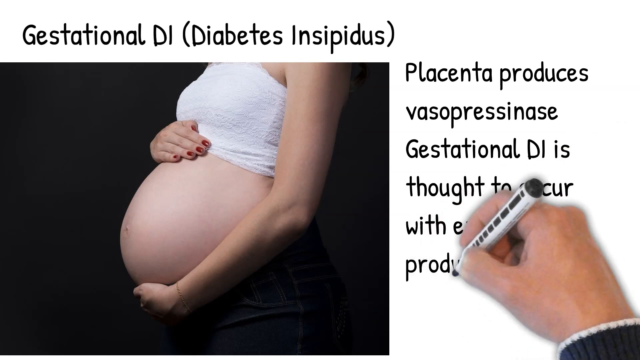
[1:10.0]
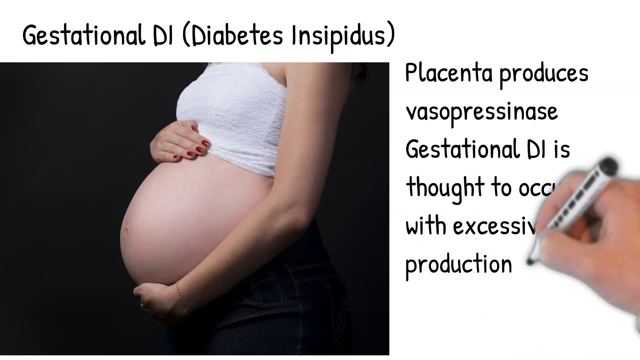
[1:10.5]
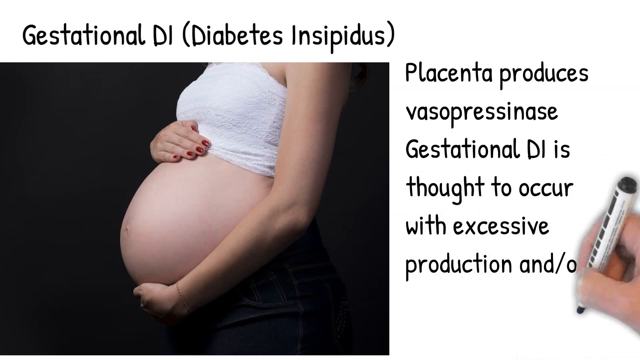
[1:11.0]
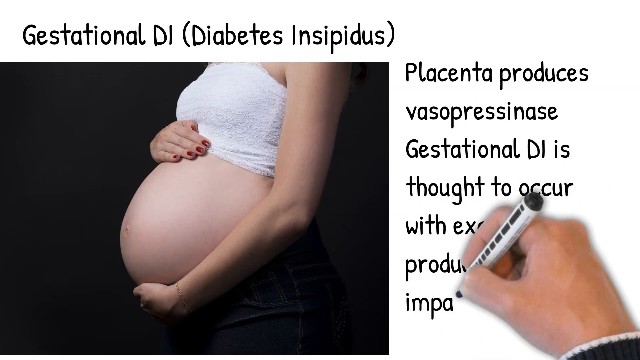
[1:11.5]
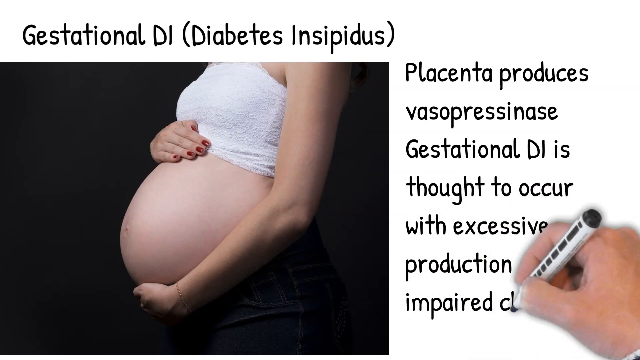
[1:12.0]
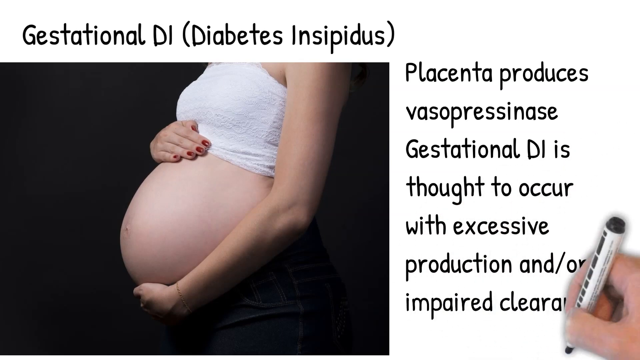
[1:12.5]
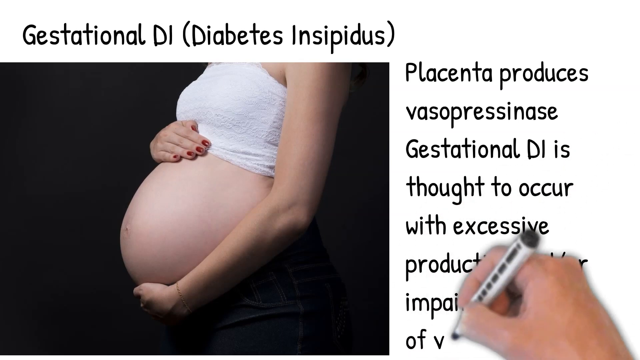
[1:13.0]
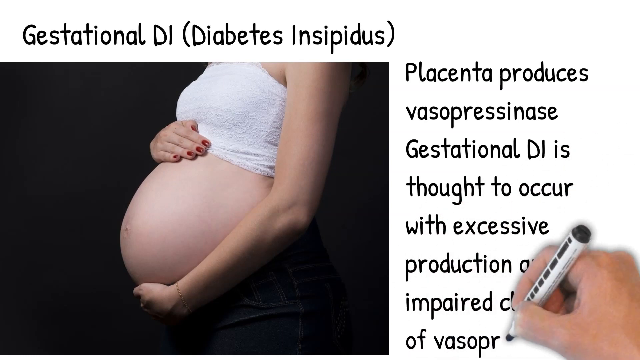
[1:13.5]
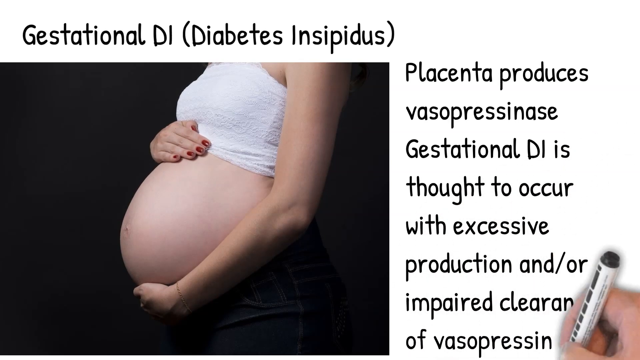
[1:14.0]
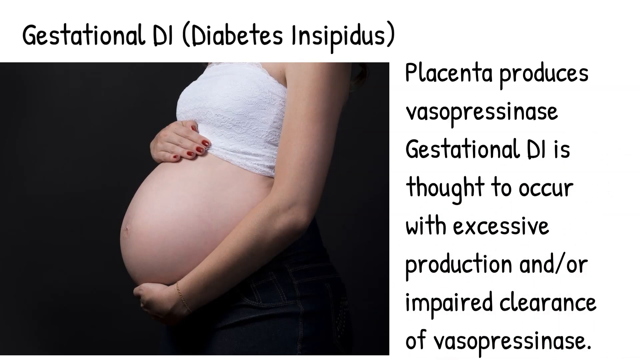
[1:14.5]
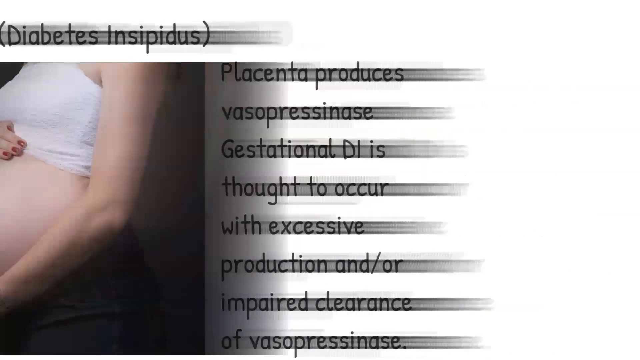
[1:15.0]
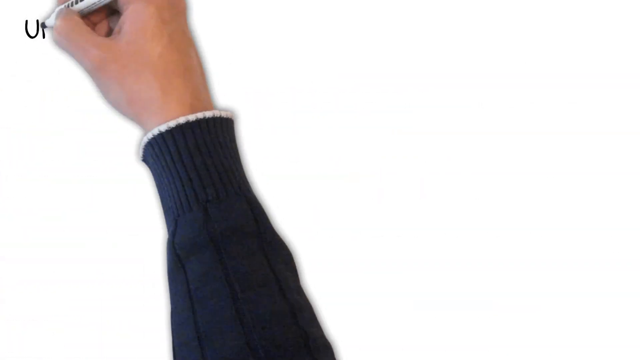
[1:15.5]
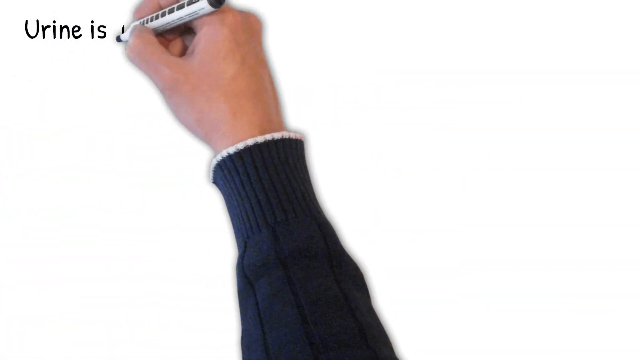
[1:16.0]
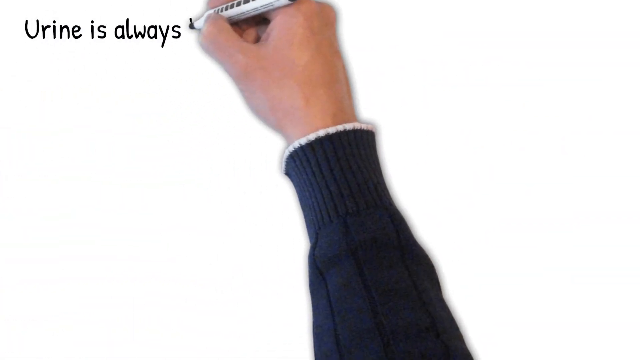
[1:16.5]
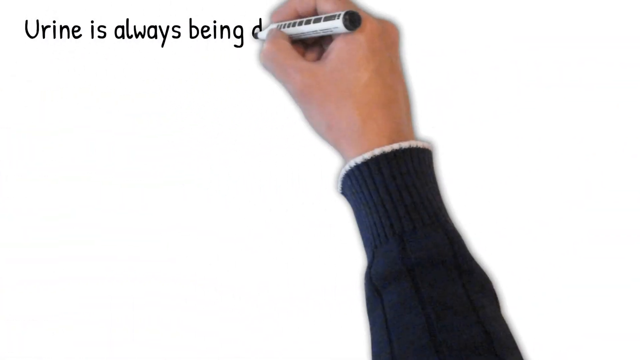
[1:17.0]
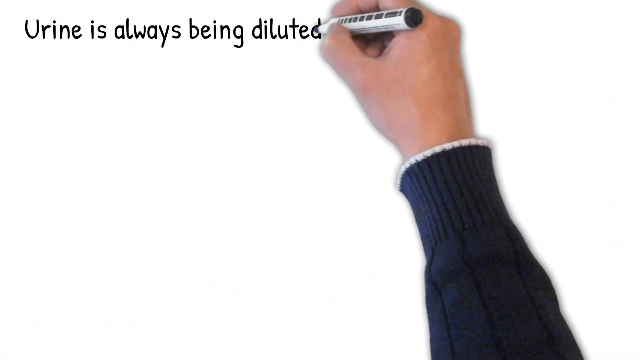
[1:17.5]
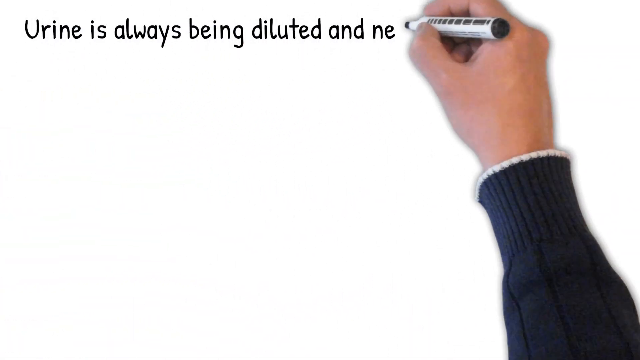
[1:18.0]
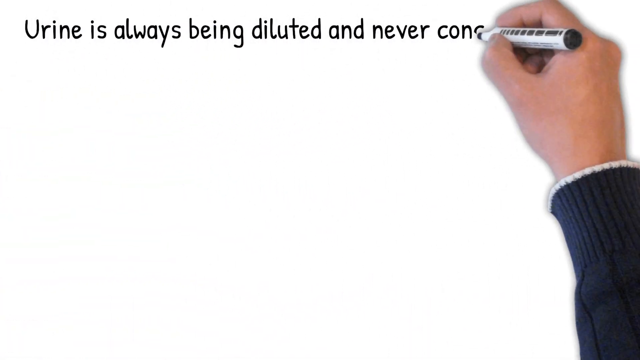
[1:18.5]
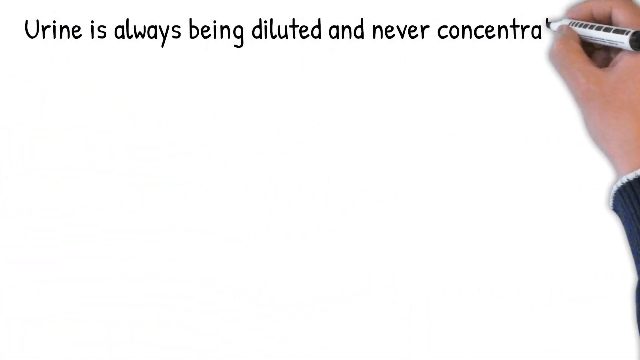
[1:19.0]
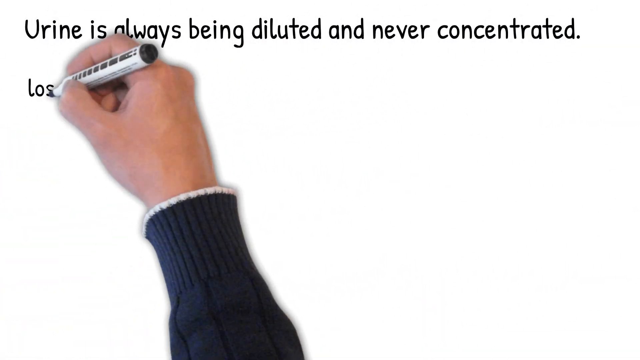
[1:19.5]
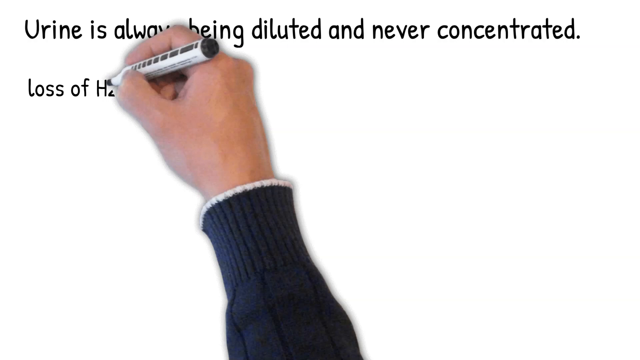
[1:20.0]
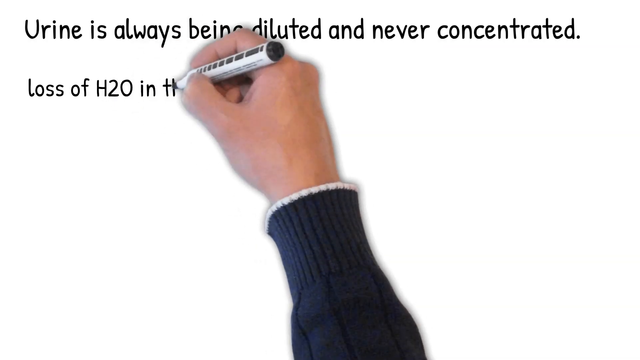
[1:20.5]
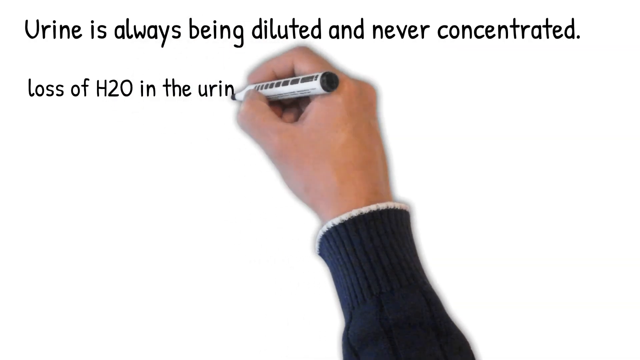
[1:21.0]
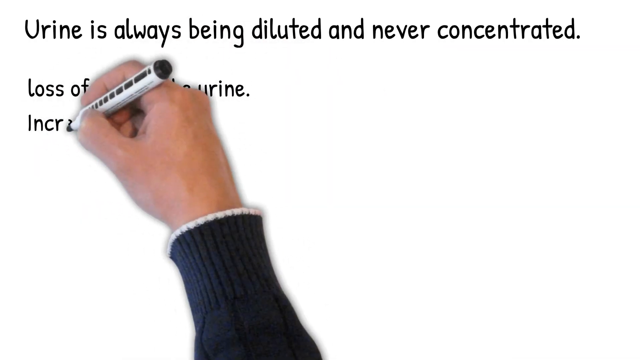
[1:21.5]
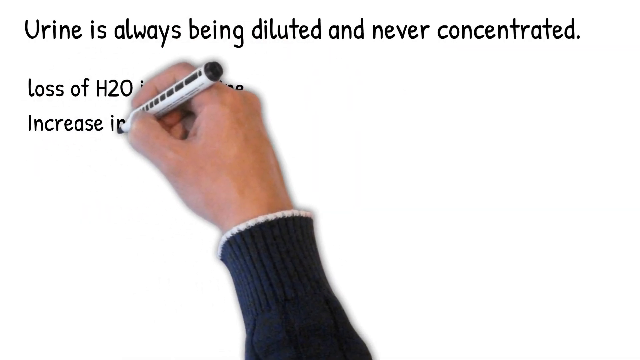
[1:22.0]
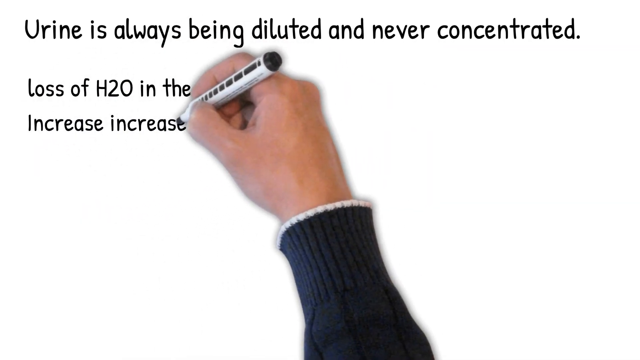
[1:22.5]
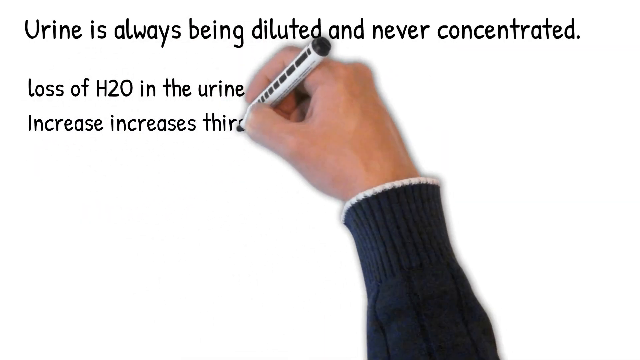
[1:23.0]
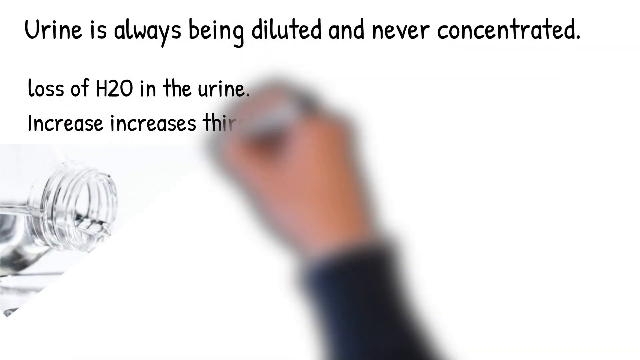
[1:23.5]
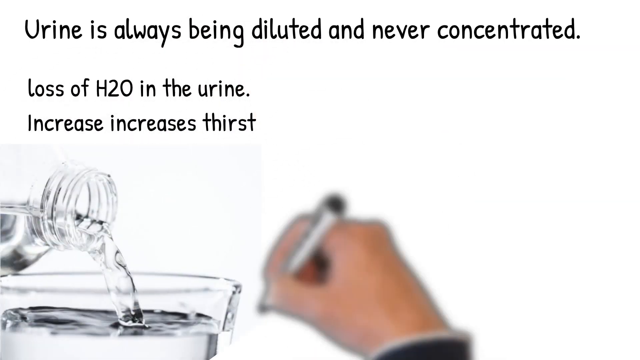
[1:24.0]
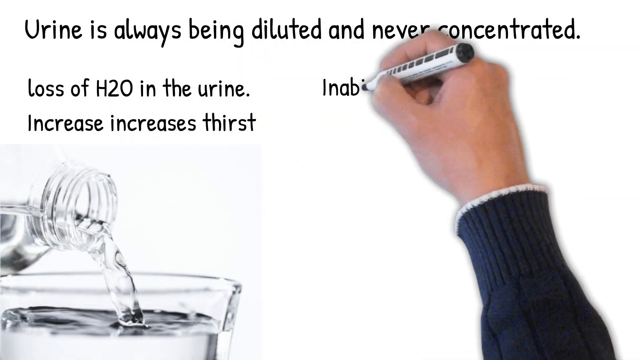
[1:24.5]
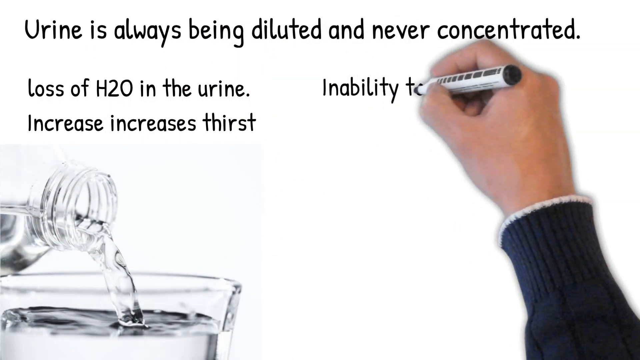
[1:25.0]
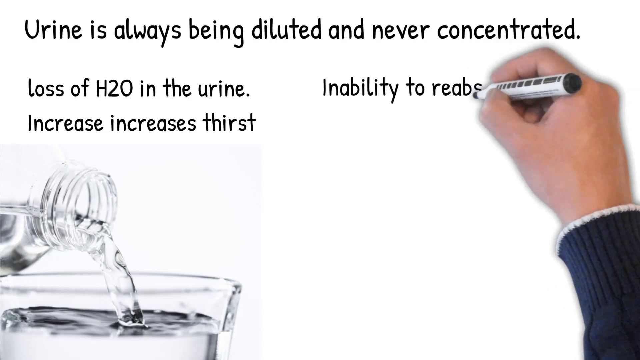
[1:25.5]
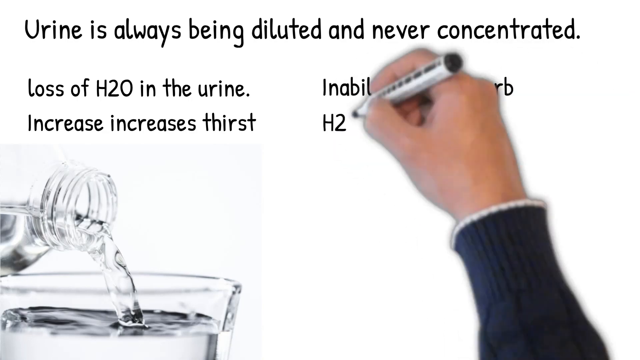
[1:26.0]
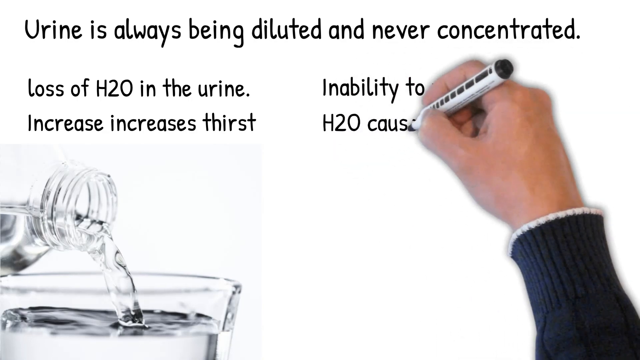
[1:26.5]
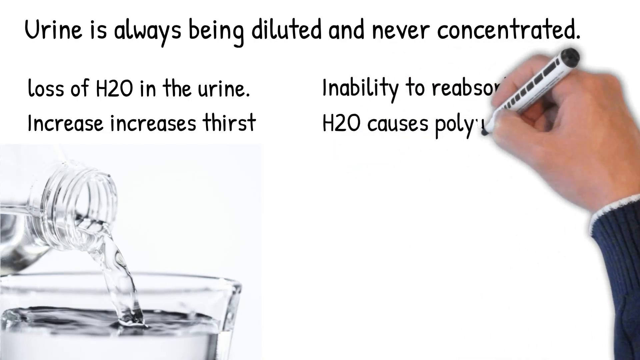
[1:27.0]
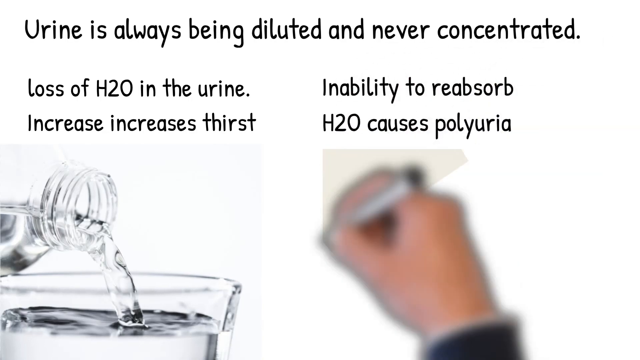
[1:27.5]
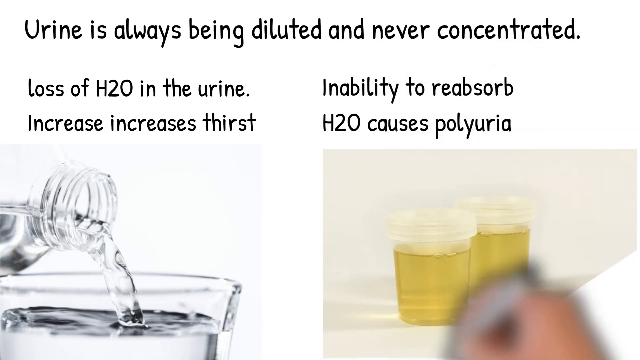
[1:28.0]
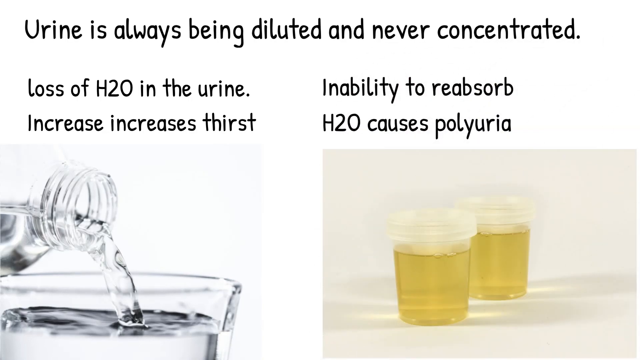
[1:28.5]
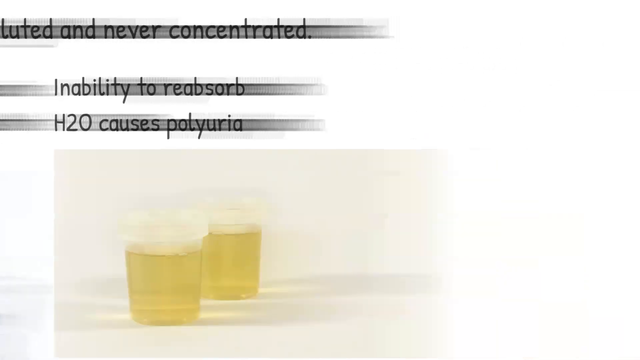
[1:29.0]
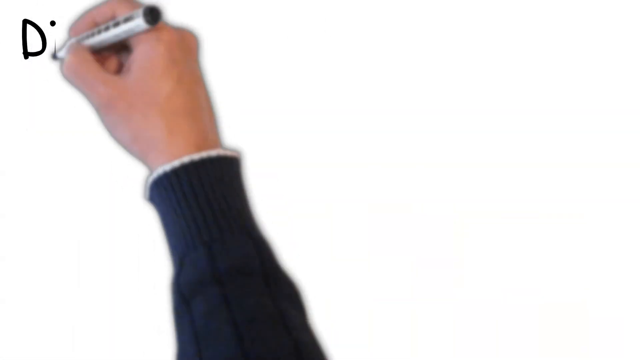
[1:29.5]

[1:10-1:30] The hand writes with a white and black pen on a brand new slide: "placenta produces vasopressinase, gestational DI is thought to occur with the excessive production and or impaired clearance of" and "urine is always being diluted and never concentrated." He also writes "loss of HGO in the urine increases thirst" and "inability to reabsorb HGO causes polyuria." The pictures for these two are a water glass with water being poured into it and two cups of yellow urine.